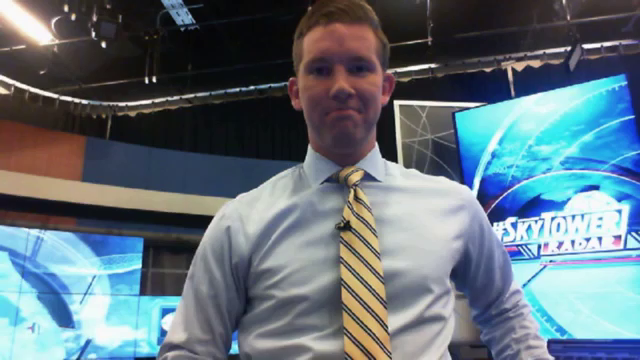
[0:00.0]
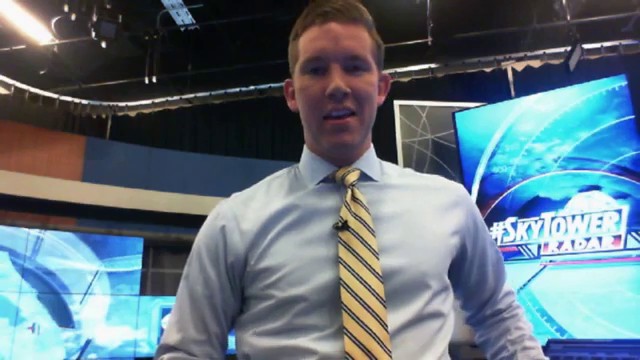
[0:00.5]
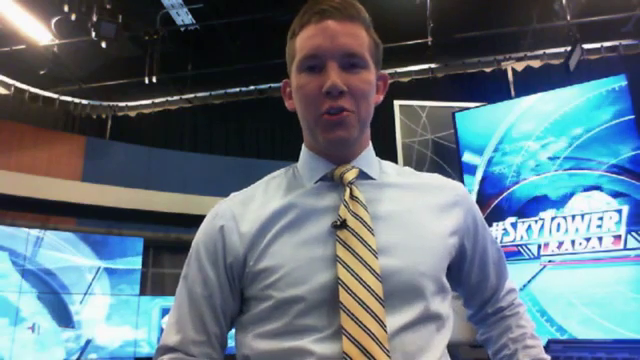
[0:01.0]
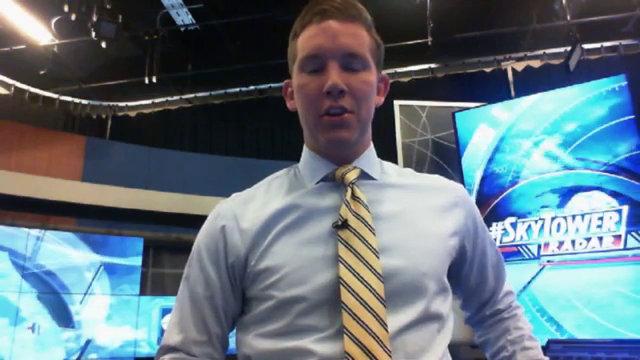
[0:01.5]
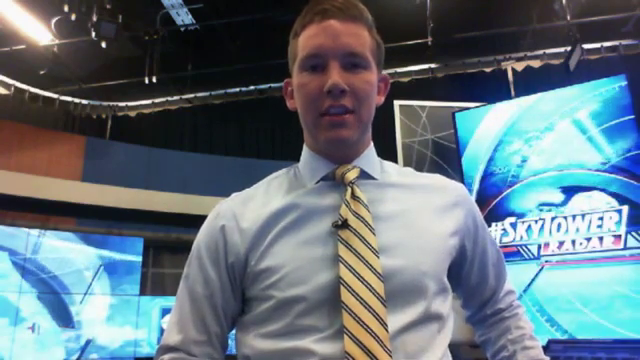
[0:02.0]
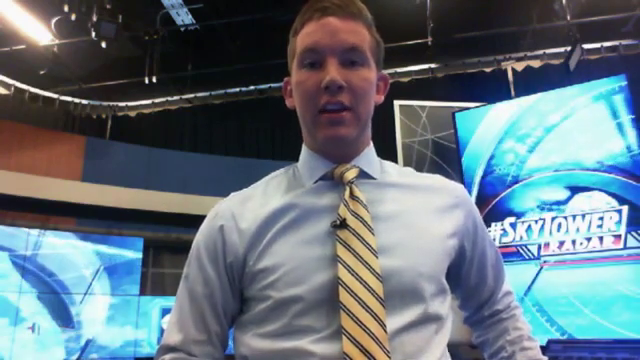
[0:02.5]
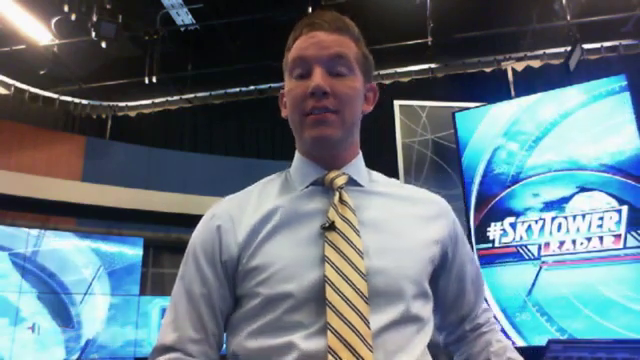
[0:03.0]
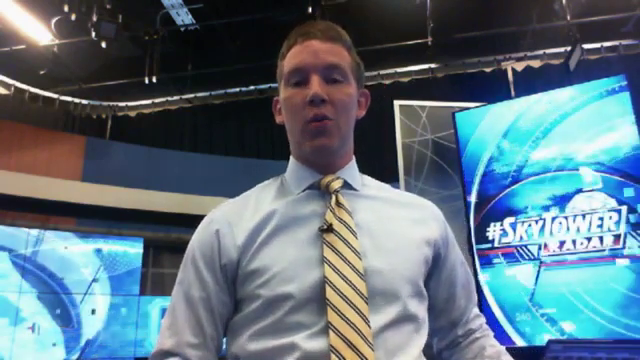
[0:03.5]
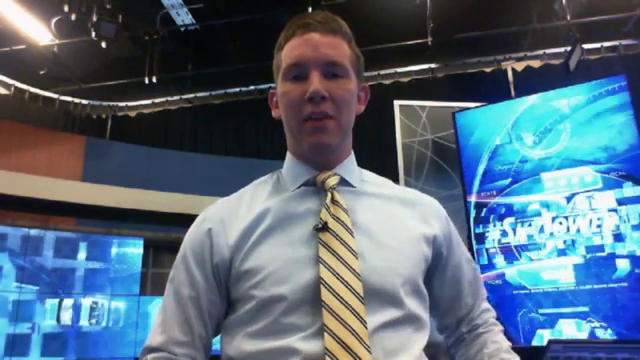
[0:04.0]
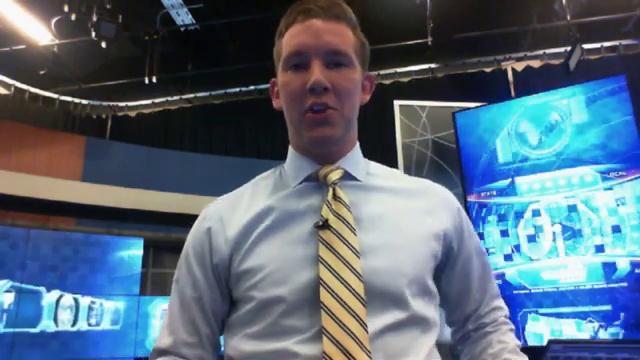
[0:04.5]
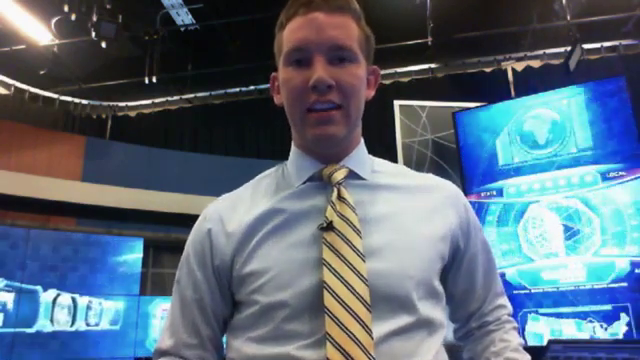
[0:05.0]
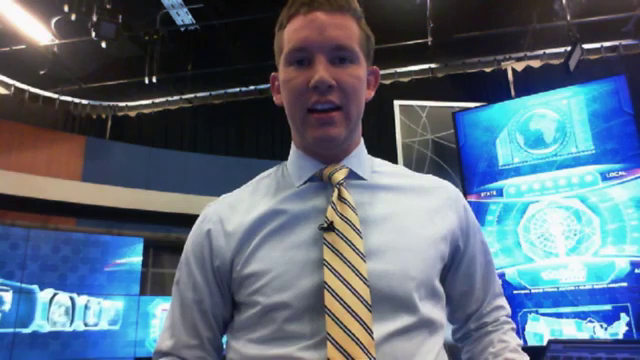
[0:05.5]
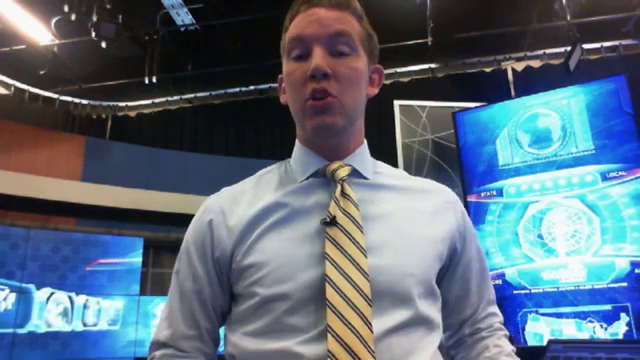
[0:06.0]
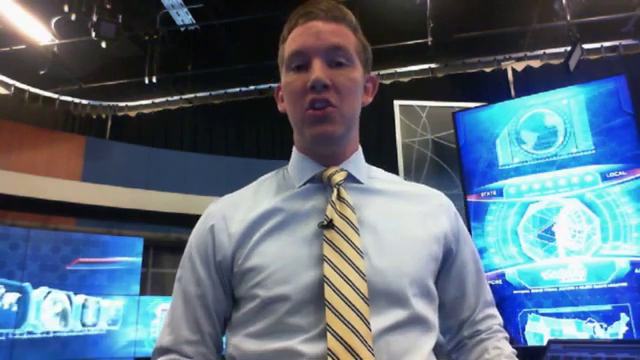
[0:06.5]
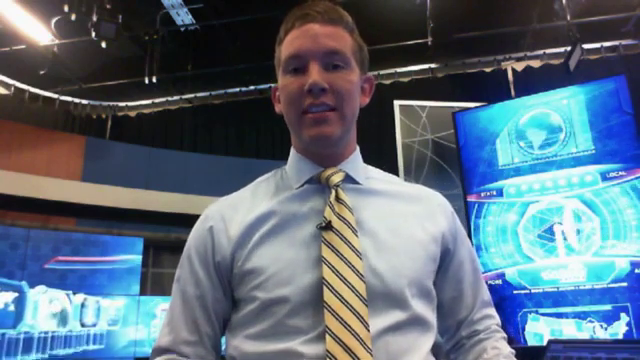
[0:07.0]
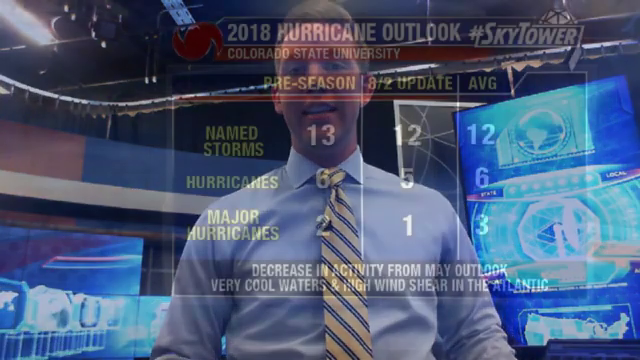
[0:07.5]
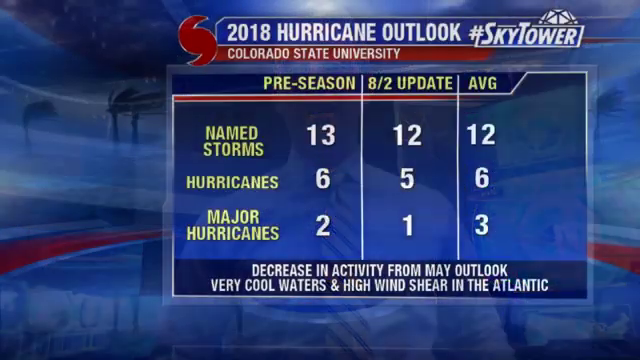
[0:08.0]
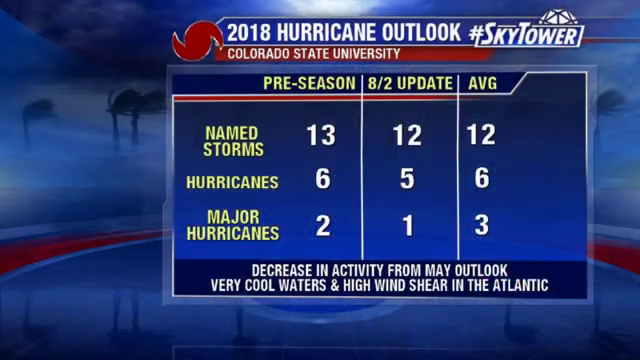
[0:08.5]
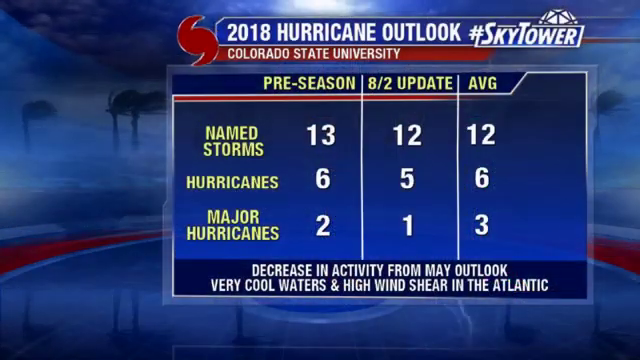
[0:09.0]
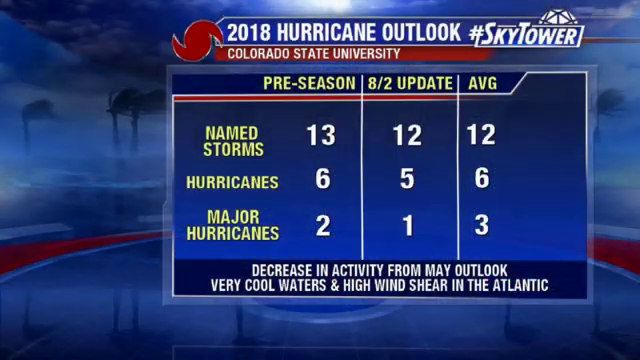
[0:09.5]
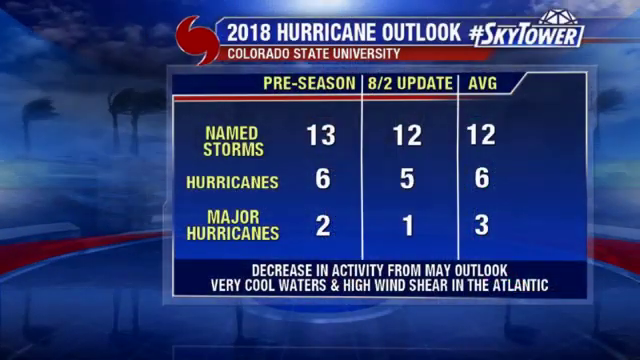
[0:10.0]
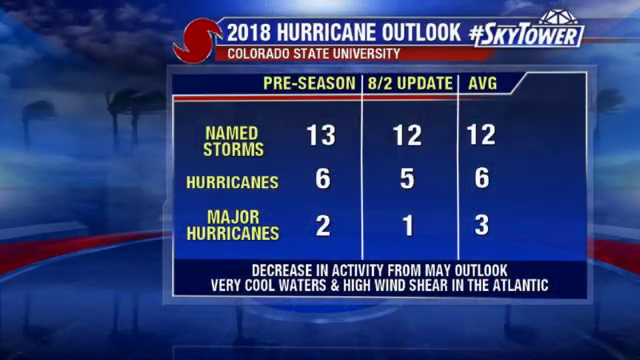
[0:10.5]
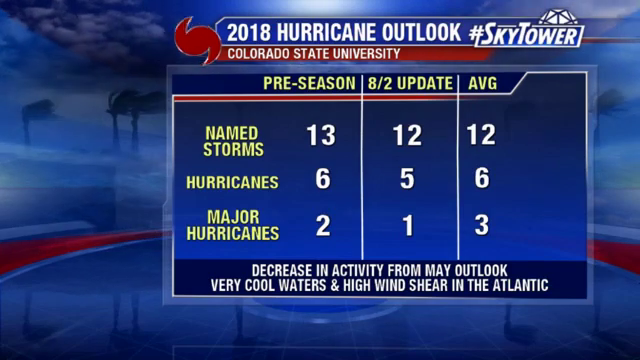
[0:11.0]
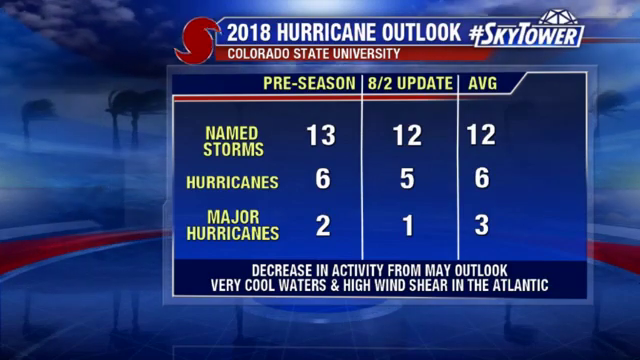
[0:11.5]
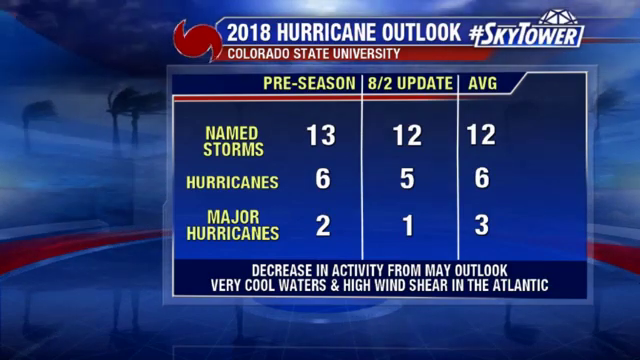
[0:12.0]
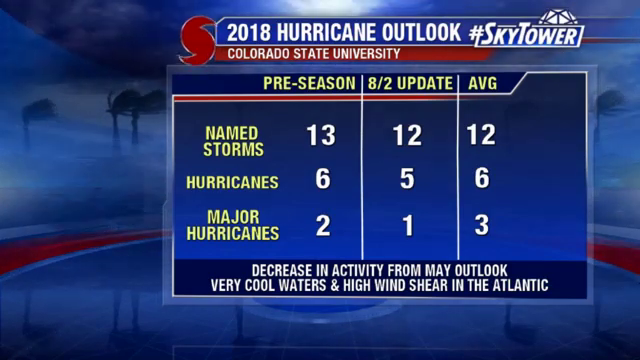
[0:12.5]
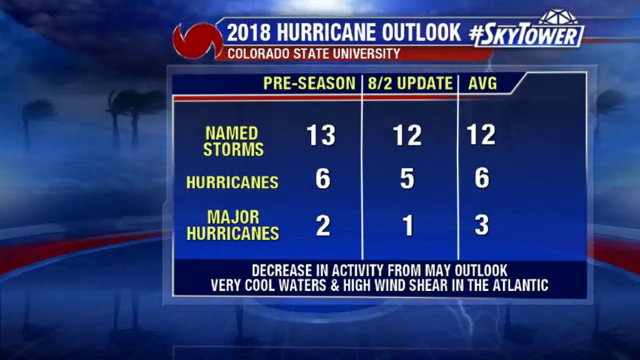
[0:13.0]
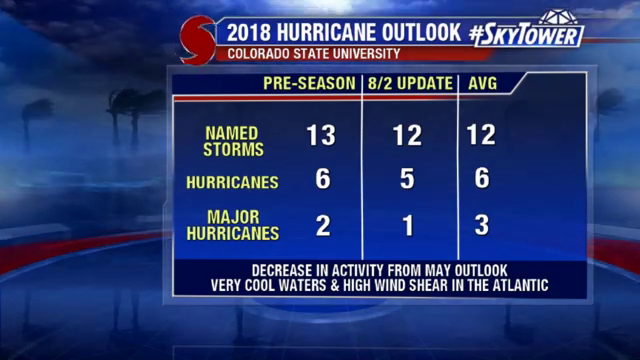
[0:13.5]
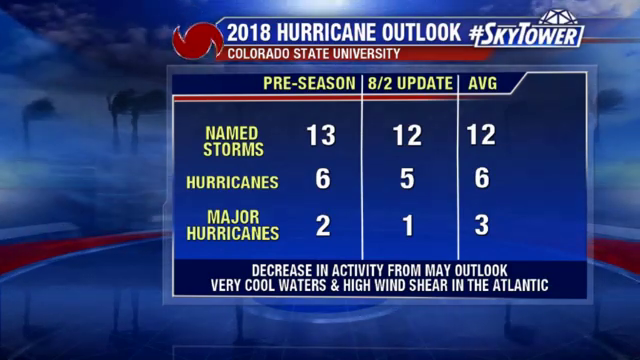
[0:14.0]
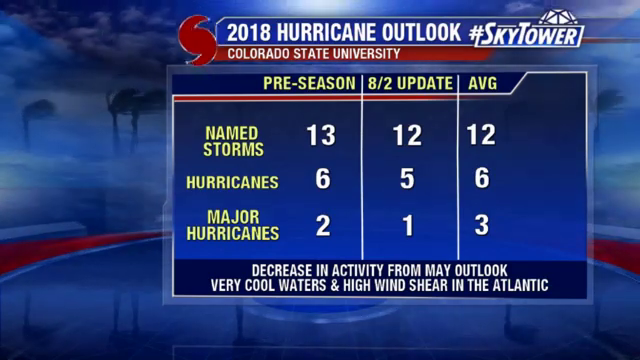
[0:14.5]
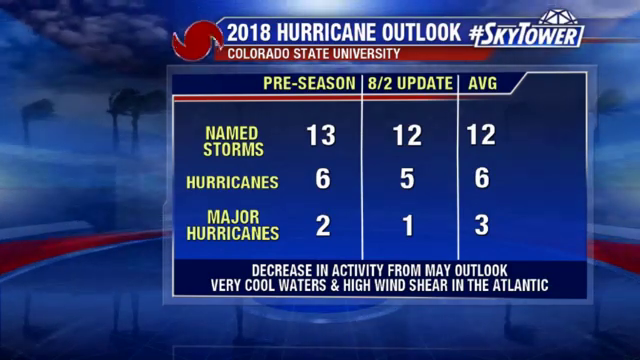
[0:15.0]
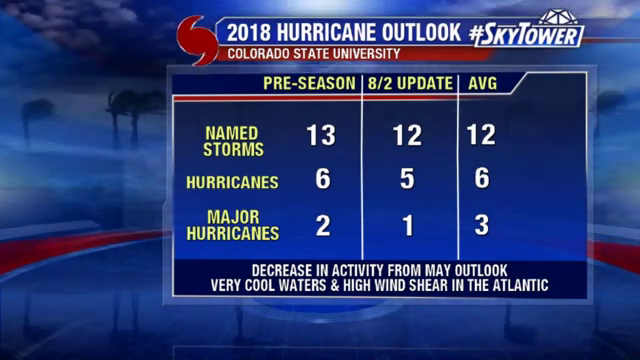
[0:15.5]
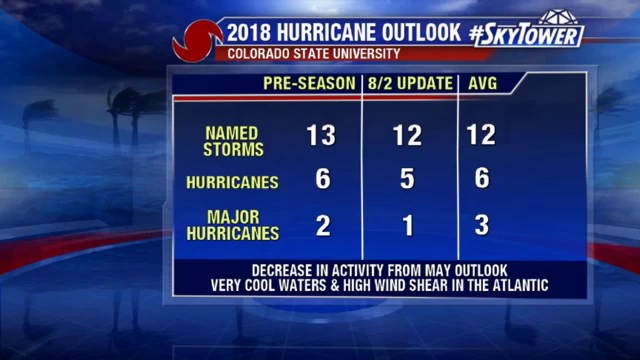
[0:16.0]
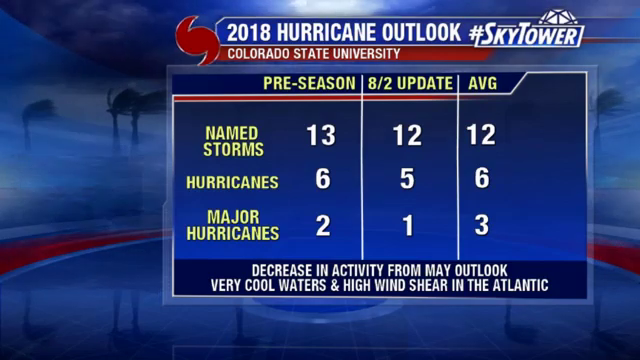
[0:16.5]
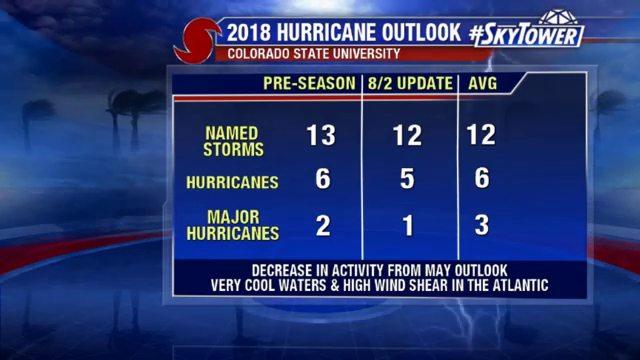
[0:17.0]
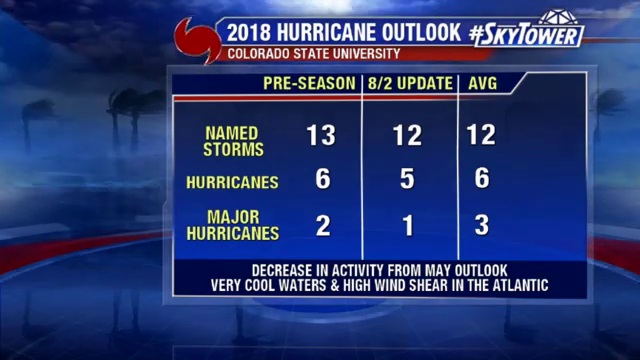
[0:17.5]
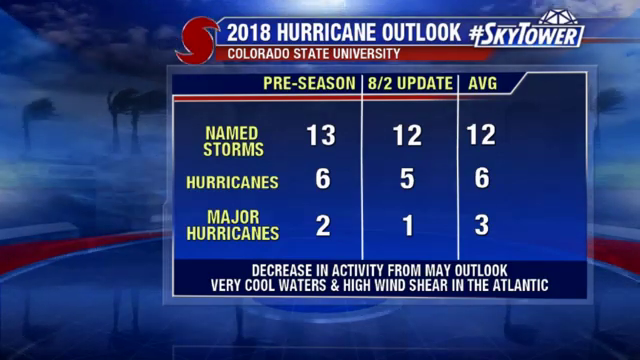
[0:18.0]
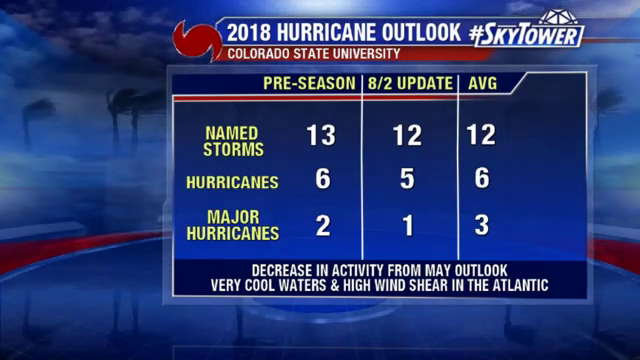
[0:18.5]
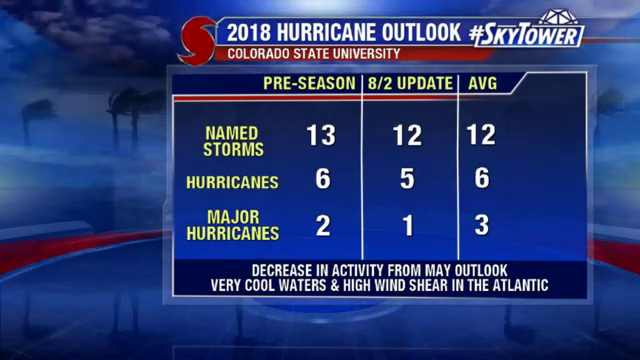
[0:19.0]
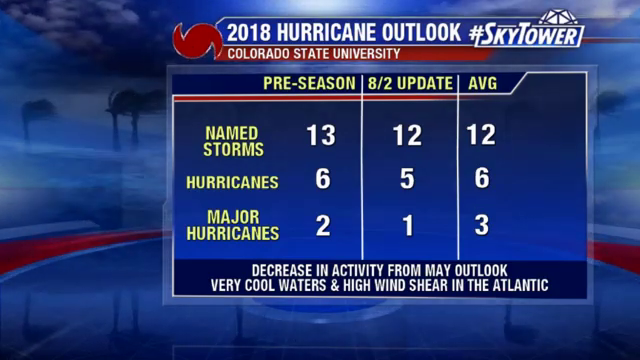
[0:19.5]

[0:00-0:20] A young man is in a newsroom, wearing a light blue collared shirt and a yellow tie with stripes running kind of diagonally. A microphone is on his tie. He looks very young, in his early 20s. Behind him is a sign reading "Sky Tower Trader." The view then pans over to the "2018 hurricane outlook," a weather forecast, with "Colorado State University" underneath it. The chart has three columns, "preseason," "8-2 update" and "average," and on the left the rows "name storms," "hurricanes" and "major hurricanes." The preseason column shows 13 named storms, six hurricanes and two major hurricanes; the 8-2 update shows 12 named storms, five hurricanes and one major hurricane; the average shows 12 storms, six hurricanes and three major hurricanes. The screen then says "decrease in activity from May outlook" and "very cool waters and high wind shear in the Atlantic."